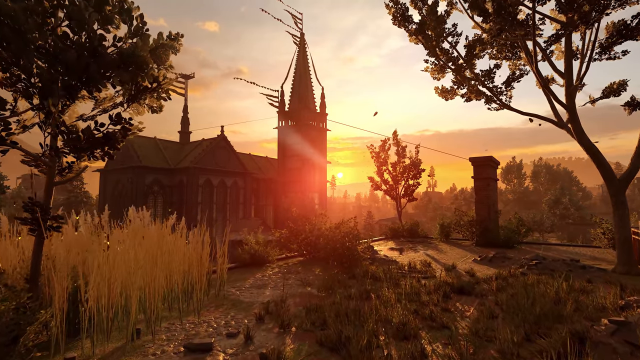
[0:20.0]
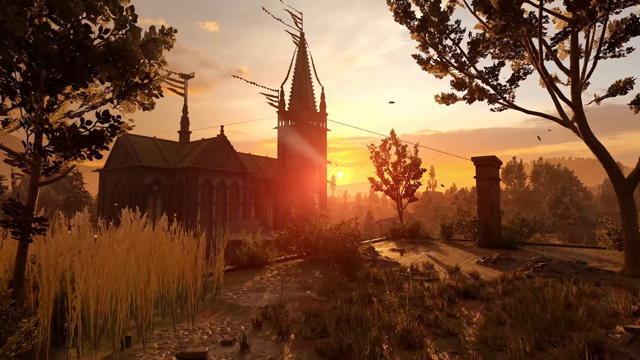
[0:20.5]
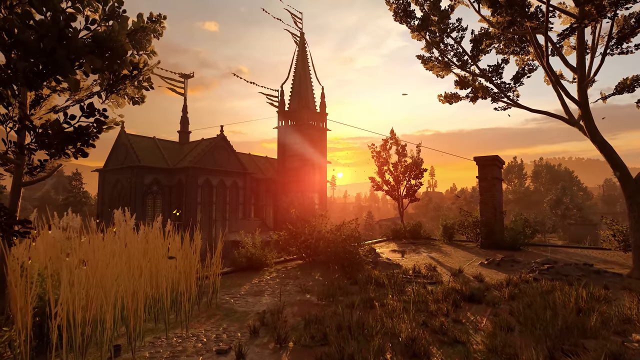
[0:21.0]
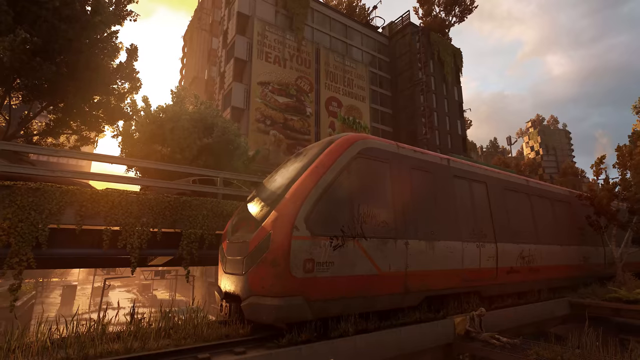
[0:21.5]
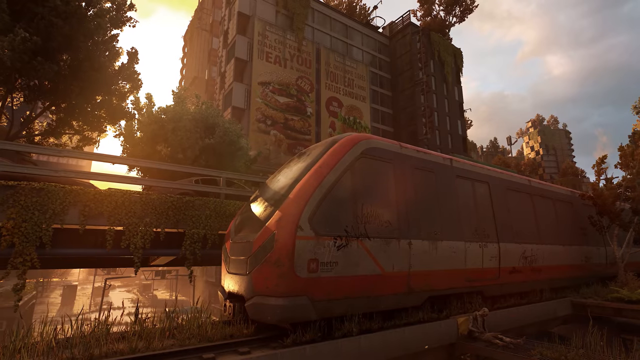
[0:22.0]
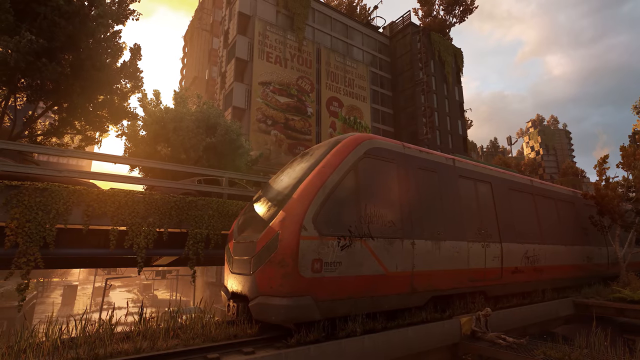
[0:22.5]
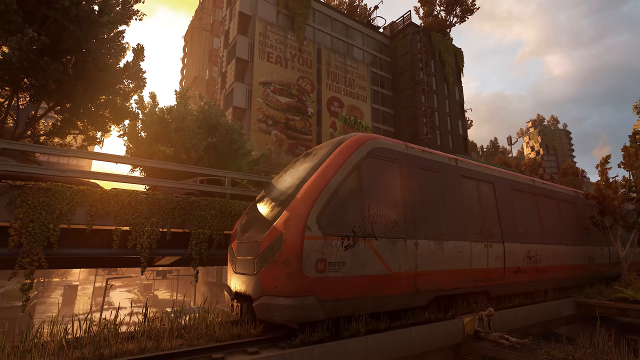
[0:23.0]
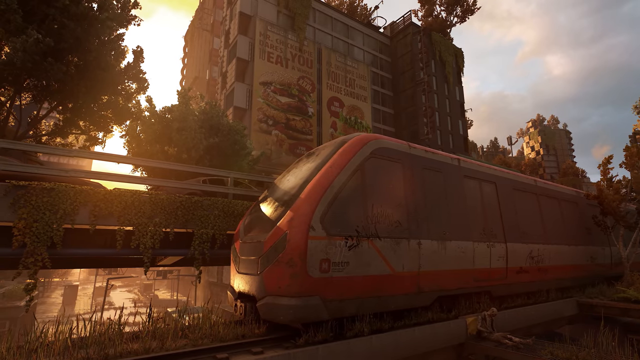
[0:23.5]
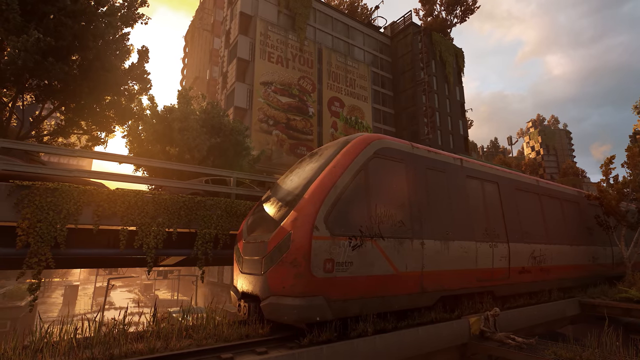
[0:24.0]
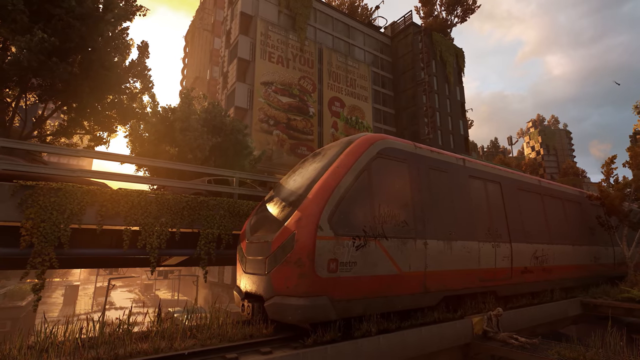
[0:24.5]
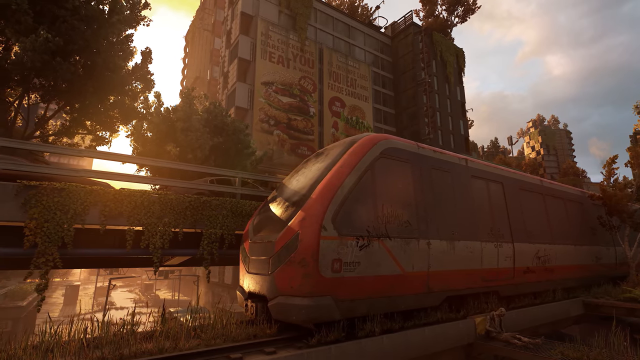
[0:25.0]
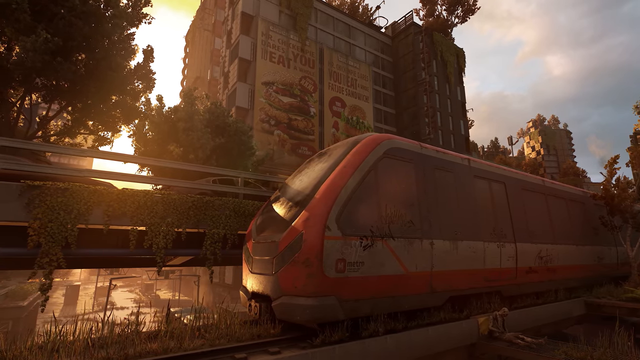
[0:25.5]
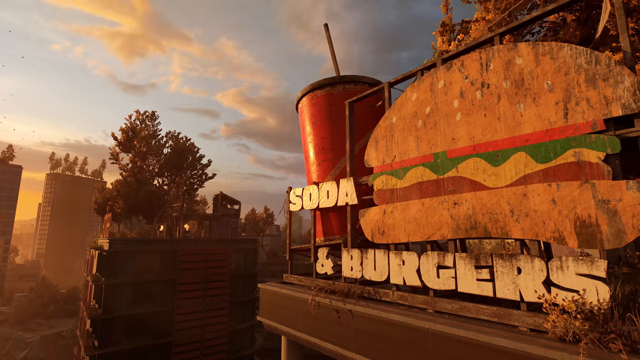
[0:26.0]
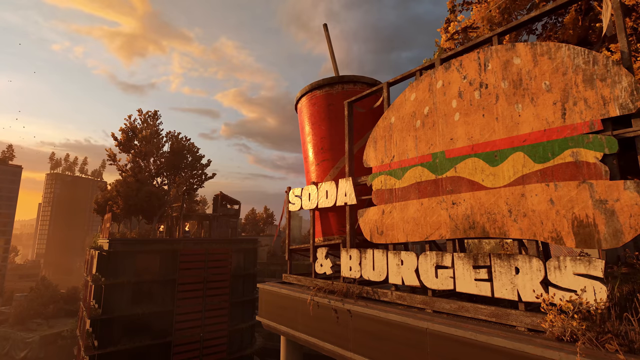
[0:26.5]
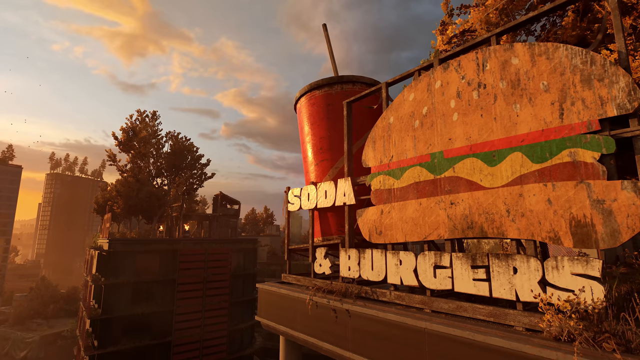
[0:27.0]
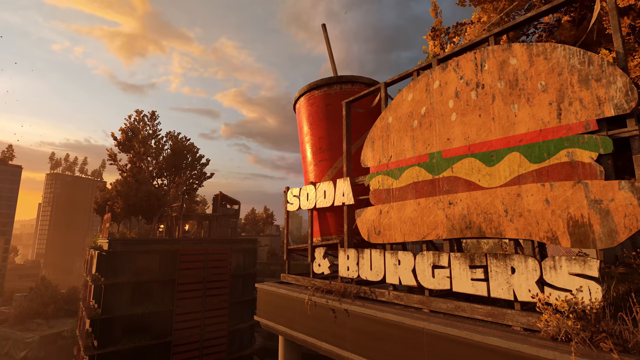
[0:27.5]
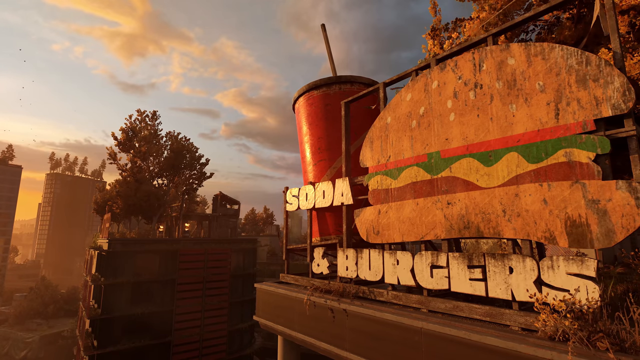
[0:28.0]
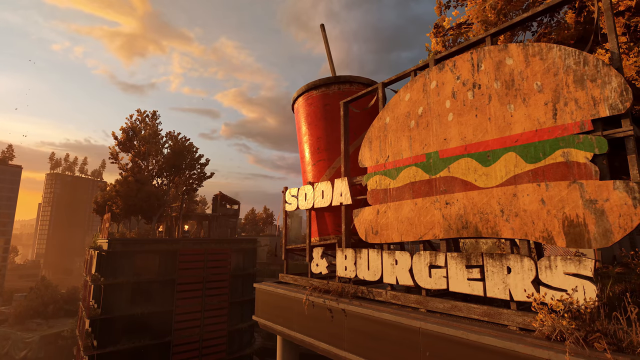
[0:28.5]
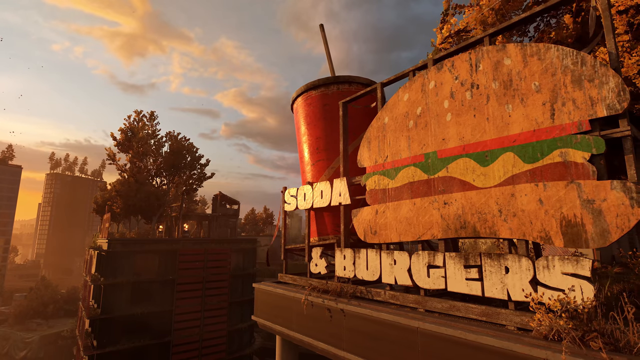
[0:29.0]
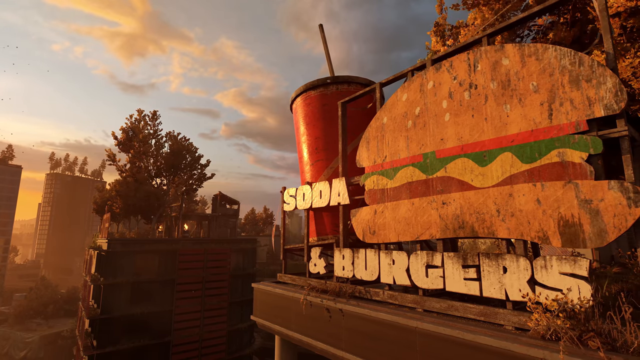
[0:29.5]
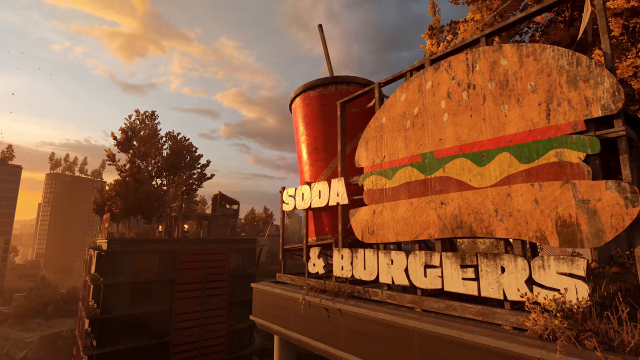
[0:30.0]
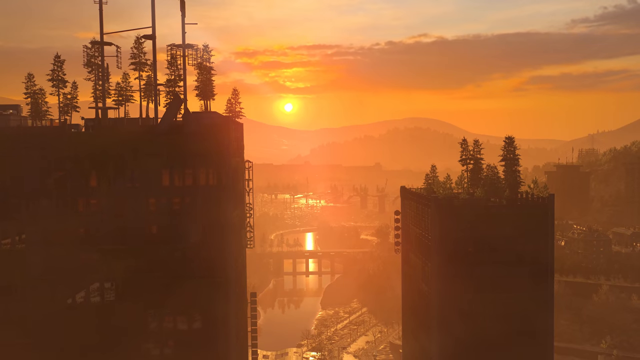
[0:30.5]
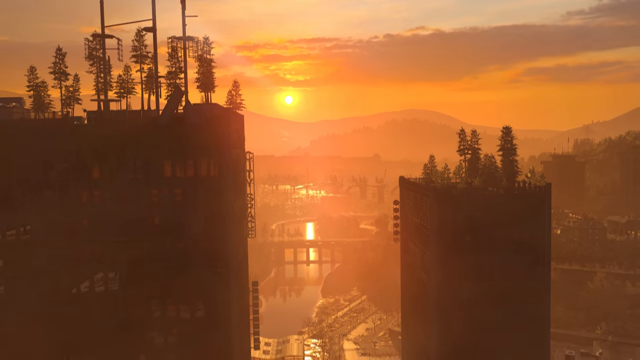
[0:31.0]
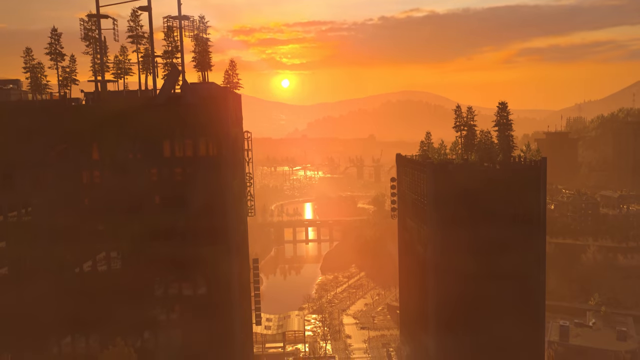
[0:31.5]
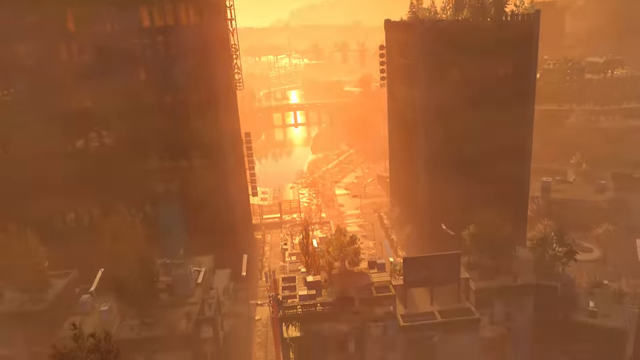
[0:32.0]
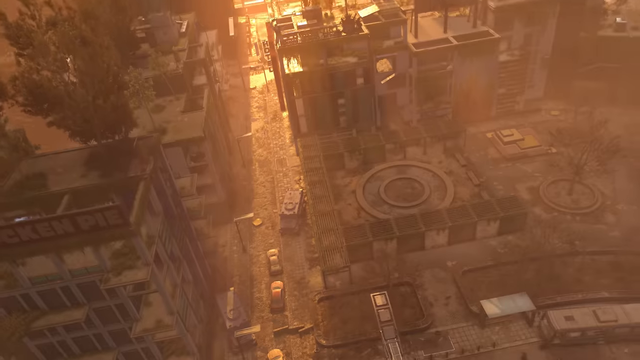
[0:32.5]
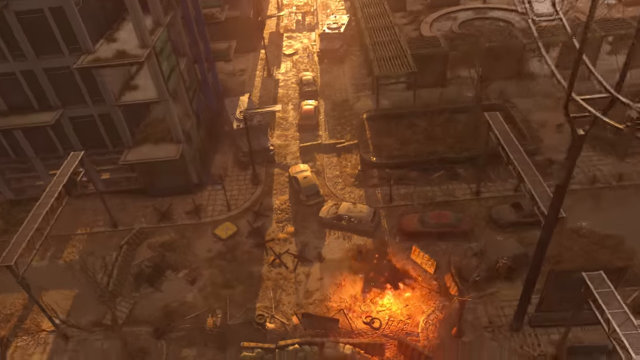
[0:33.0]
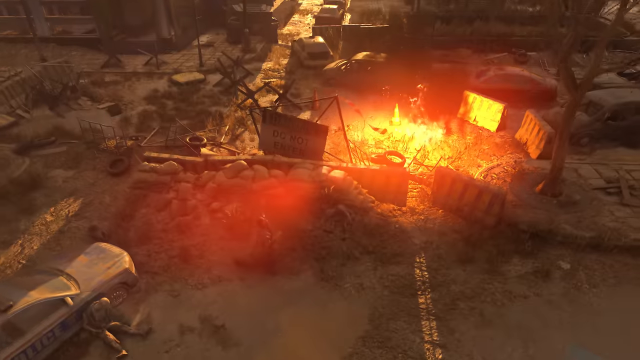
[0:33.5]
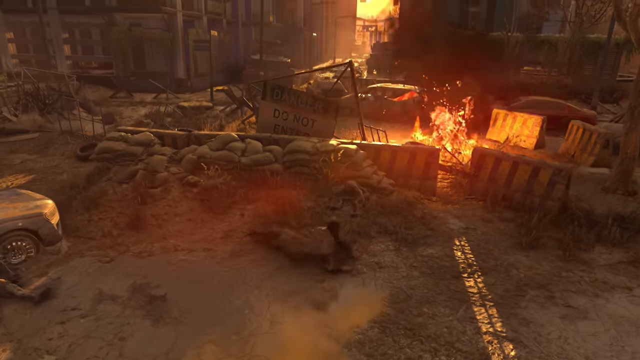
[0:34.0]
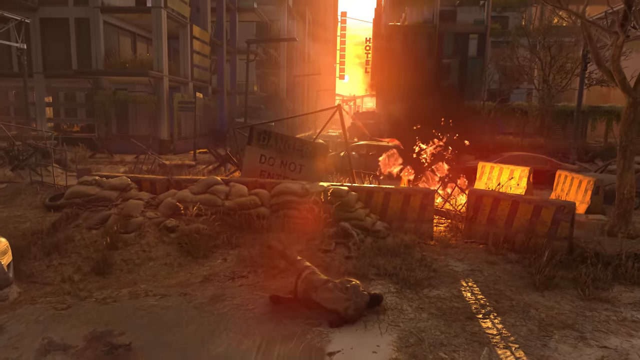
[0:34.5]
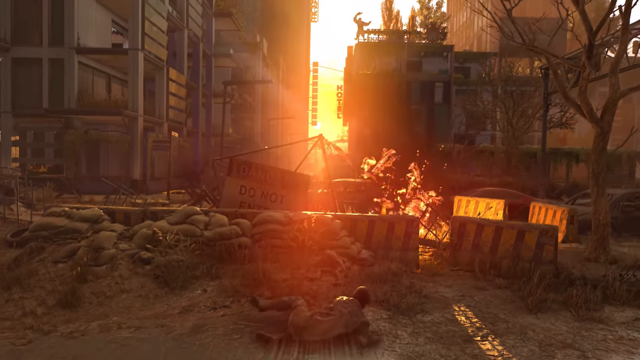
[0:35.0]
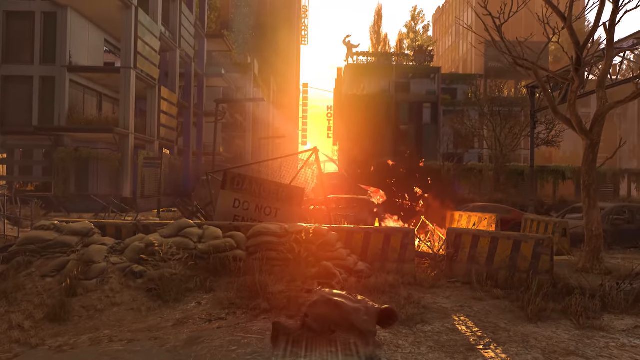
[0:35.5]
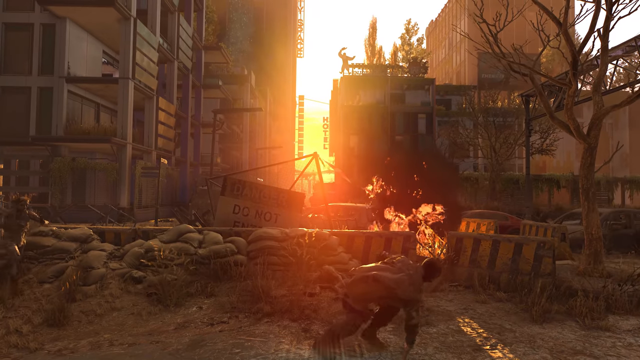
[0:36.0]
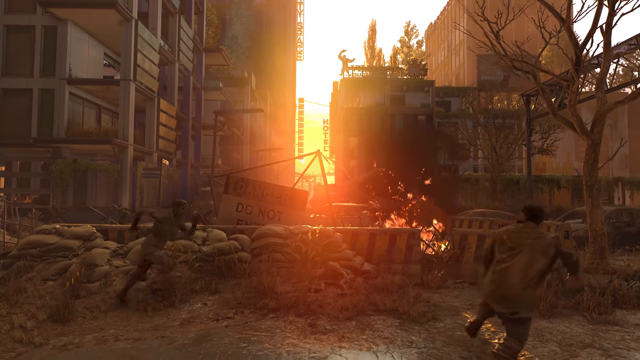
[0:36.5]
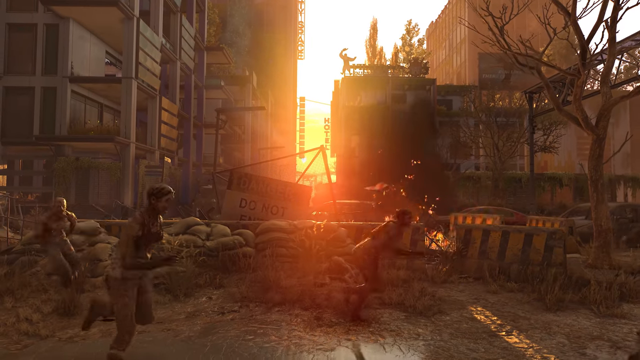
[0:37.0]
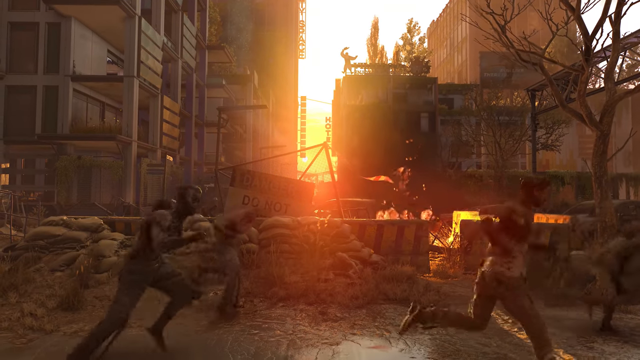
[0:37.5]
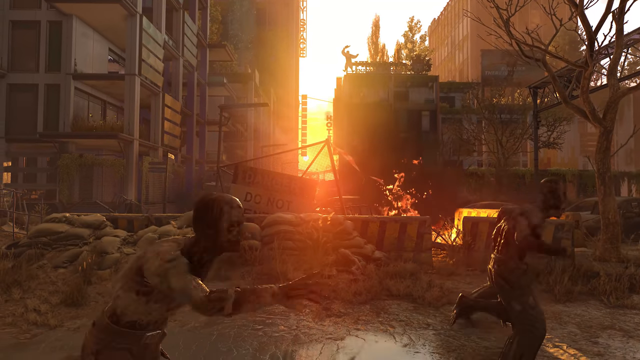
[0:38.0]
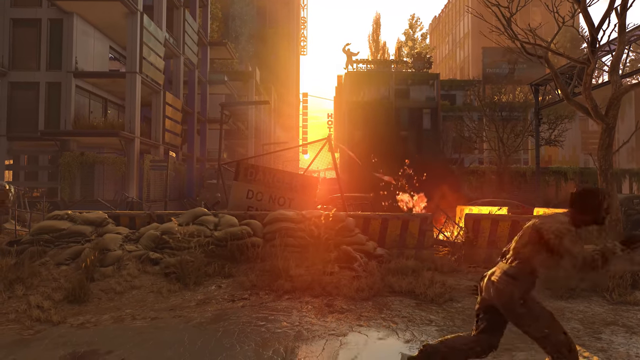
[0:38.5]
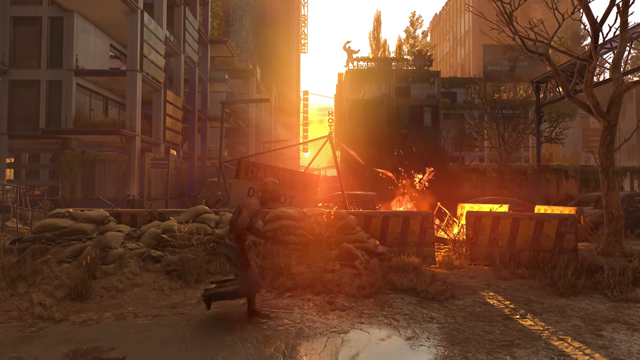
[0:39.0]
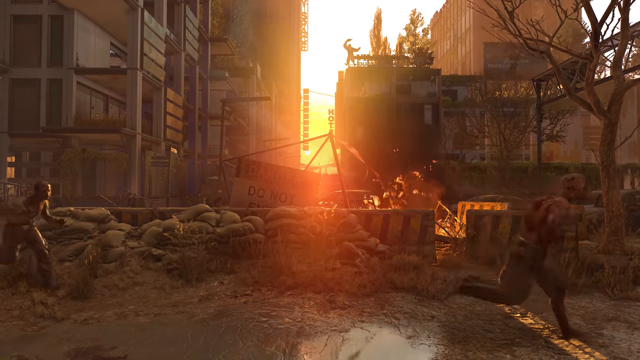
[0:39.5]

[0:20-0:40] What appears to be a church is shown, along with a billboard that says "soda and burgers." A mountain is in the back and the sun is coming up. The camera then zooms down very fast, revealing people fighting, and an explosion goes off. The camera zooms in fast again: there is fire everywhere, a sign that says "danger do not enter," a bunch of sandbags, and people running in different directions in a chaotic scene. Someone rolls on the floor, jumps down, jumps back up and starts running. A group of people, or possibly zombies running in a weird way, seem to be chasing him.